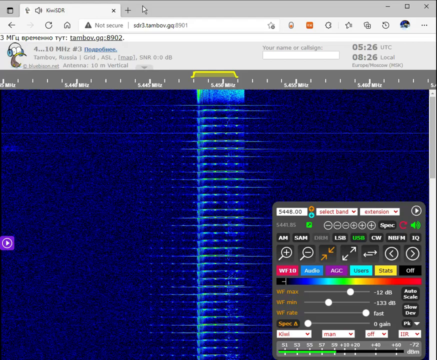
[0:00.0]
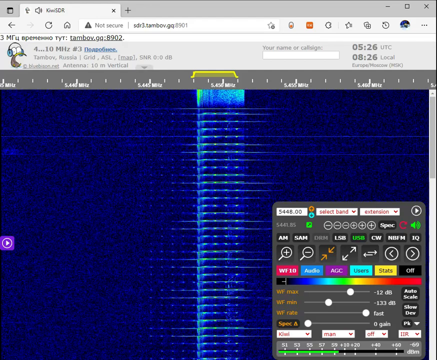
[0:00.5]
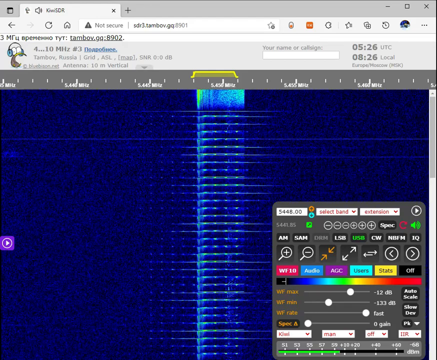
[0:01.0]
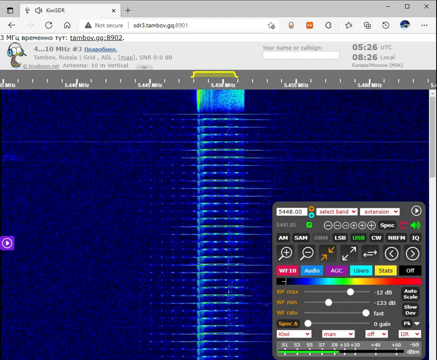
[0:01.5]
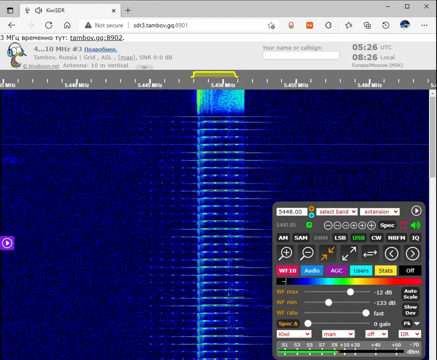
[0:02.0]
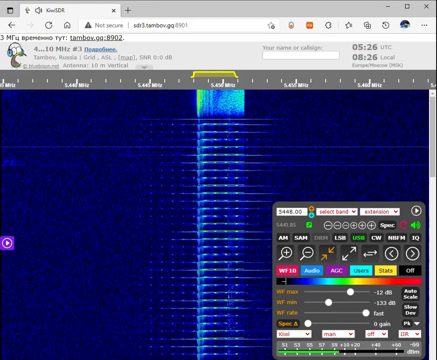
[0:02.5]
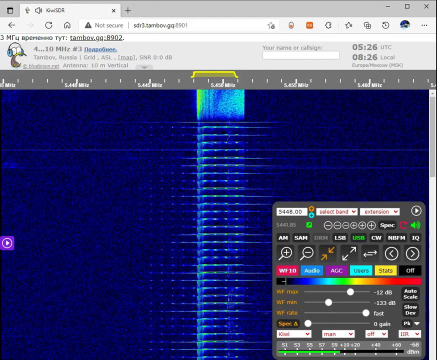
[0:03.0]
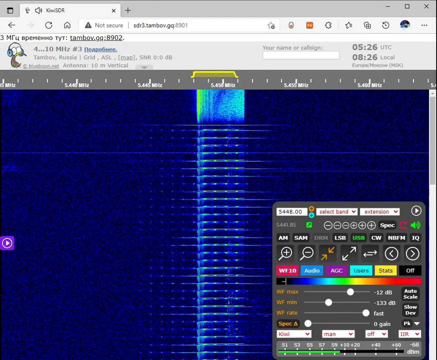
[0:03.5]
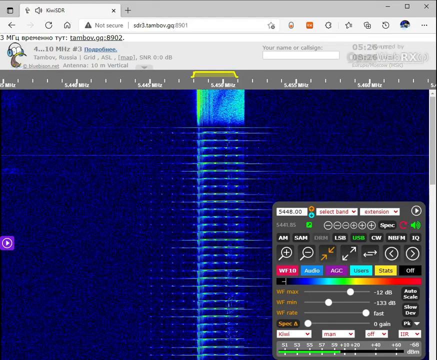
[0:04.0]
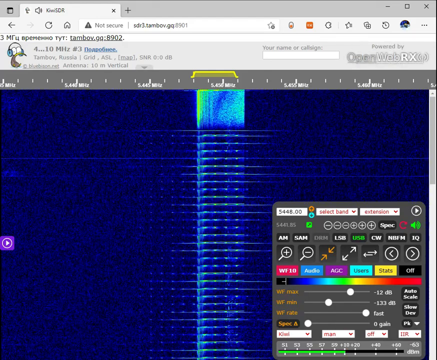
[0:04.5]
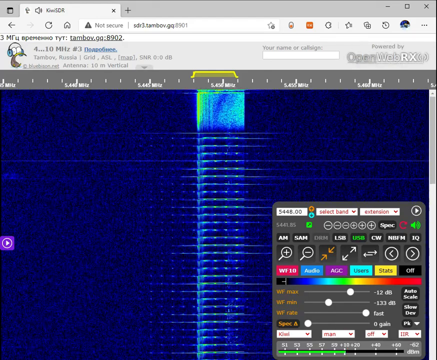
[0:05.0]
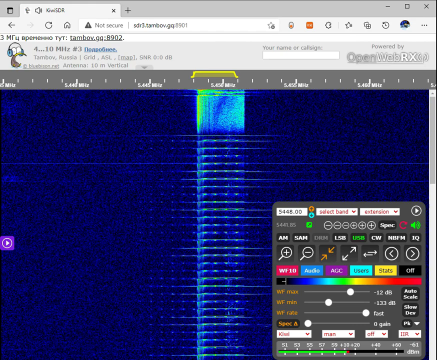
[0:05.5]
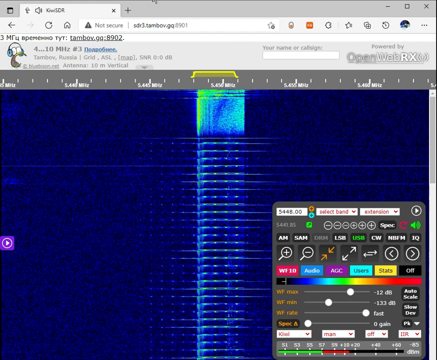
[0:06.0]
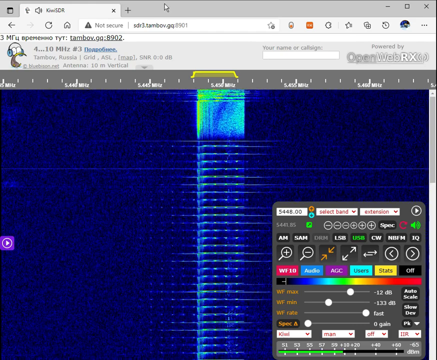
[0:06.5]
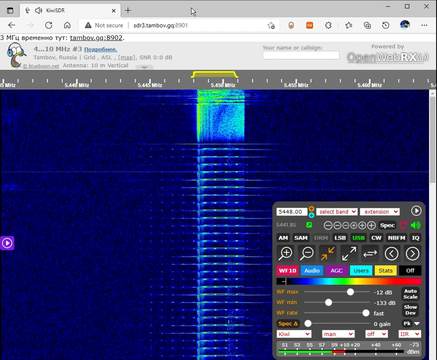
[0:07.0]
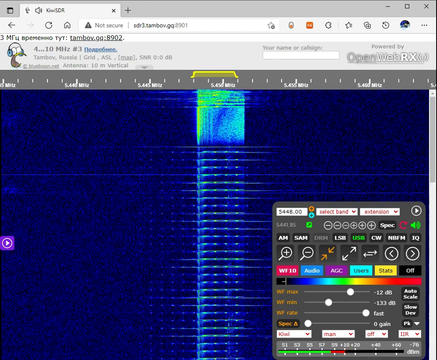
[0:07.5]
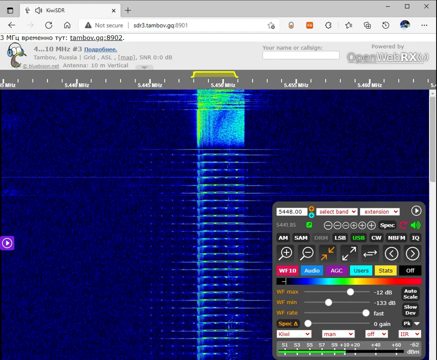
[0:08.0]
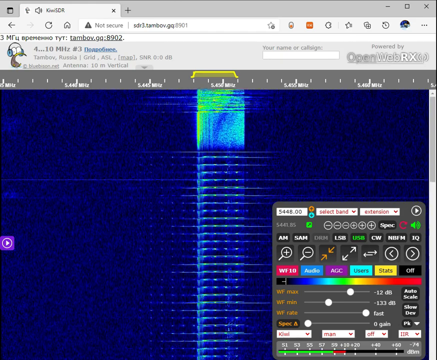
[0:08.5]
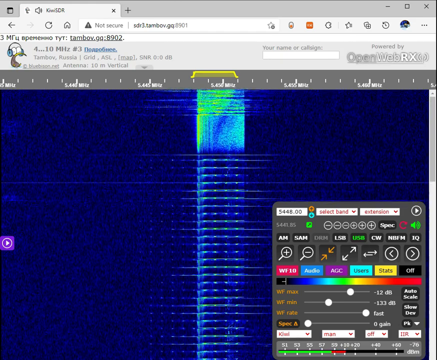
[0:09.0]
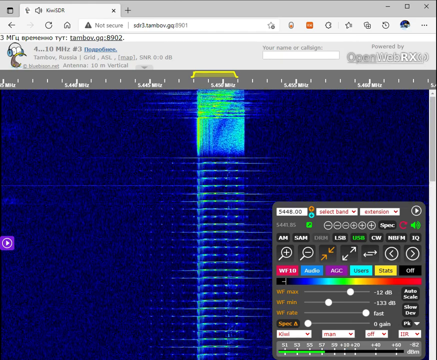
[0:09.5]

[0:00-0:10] A computer program indicates it is powered by OpenWebRX and relates to radio coming out of Russia. In the middle of a very pixelated, royal blue screen is a vertical line, and off of it run horizontal lines in a lighter green-blue color; they are fairly wide, roughly two or three inches. In the bottom right corner there appears to be a console for changing settings. The highlighted button reads "USB" and is green, and the sound button is also green, so these two seem to be active. Most of the text is written in Russian, though "Europe Moscow" appears underneath the time. The text "tambov.go:8902" is also shown, apparently a user's handle or call sign.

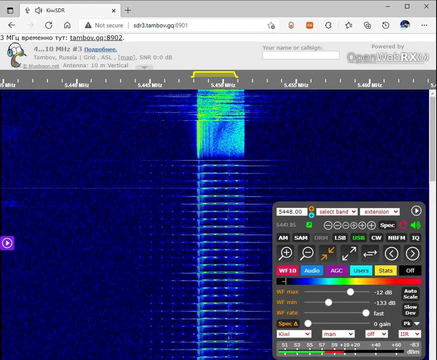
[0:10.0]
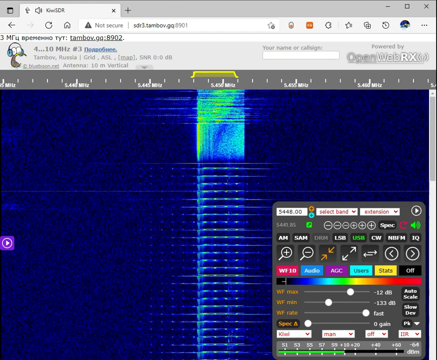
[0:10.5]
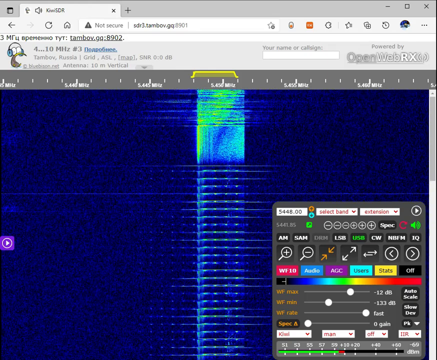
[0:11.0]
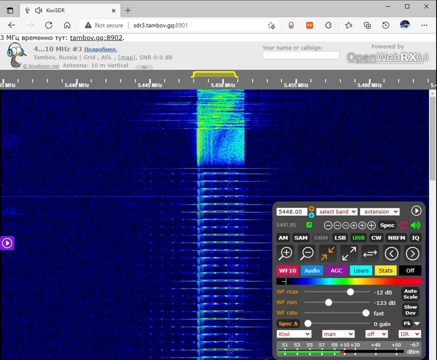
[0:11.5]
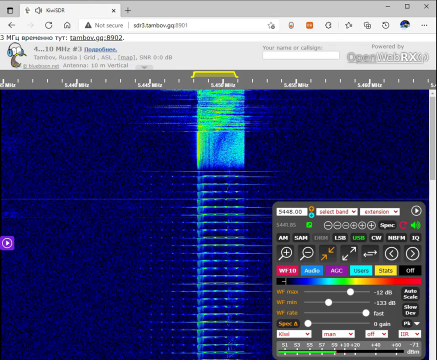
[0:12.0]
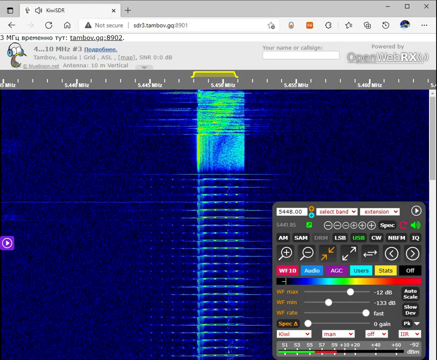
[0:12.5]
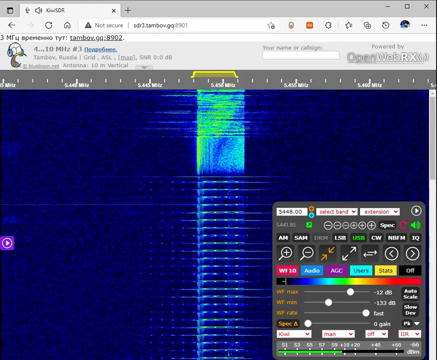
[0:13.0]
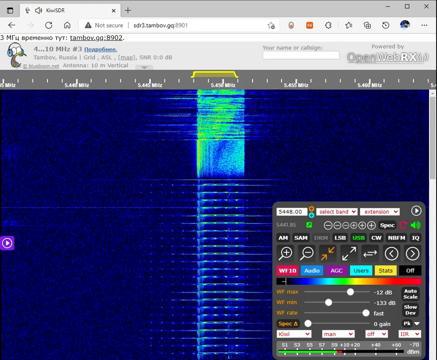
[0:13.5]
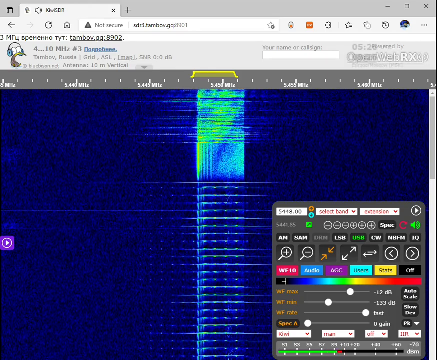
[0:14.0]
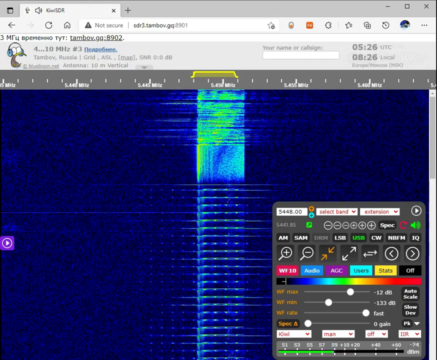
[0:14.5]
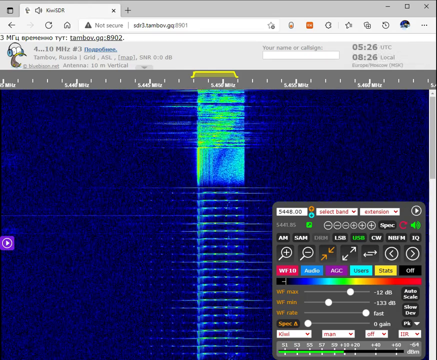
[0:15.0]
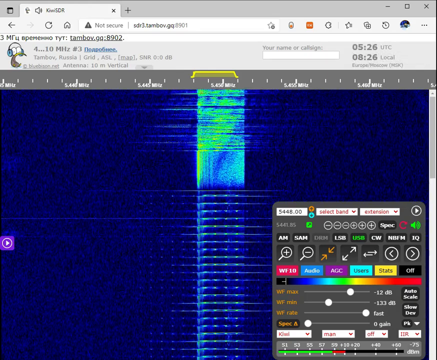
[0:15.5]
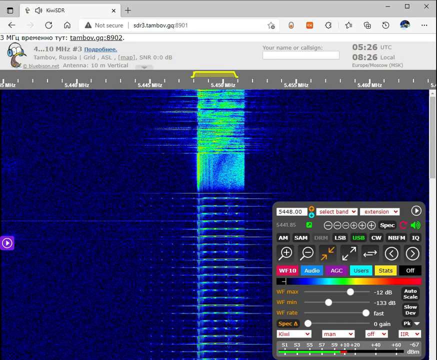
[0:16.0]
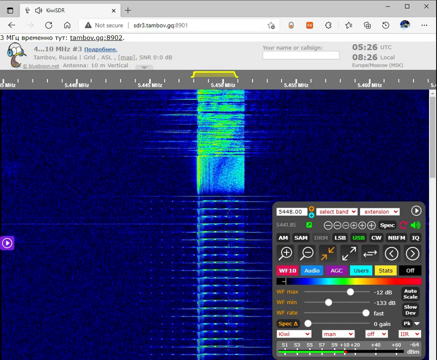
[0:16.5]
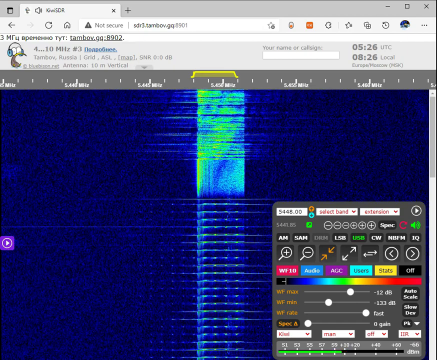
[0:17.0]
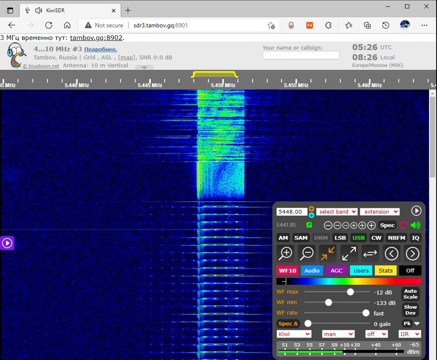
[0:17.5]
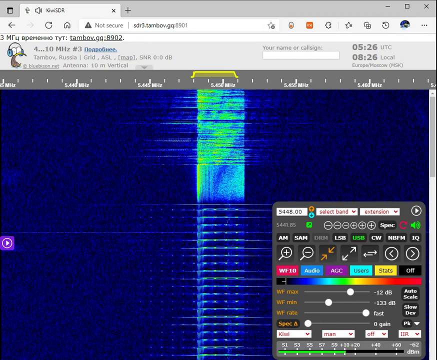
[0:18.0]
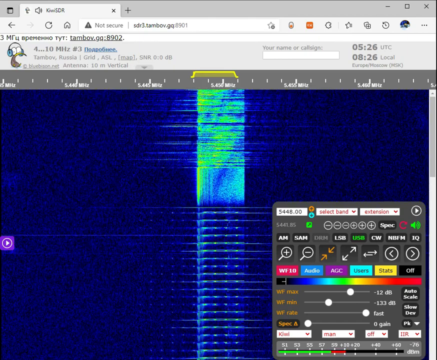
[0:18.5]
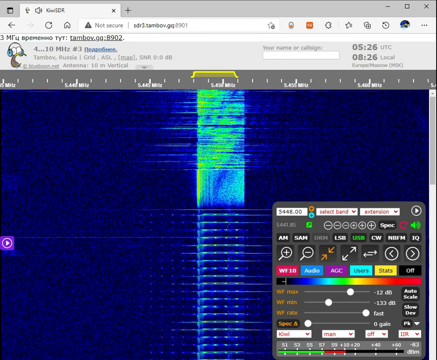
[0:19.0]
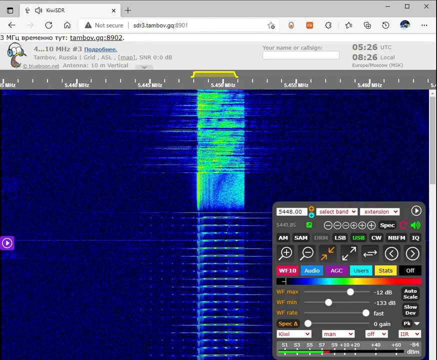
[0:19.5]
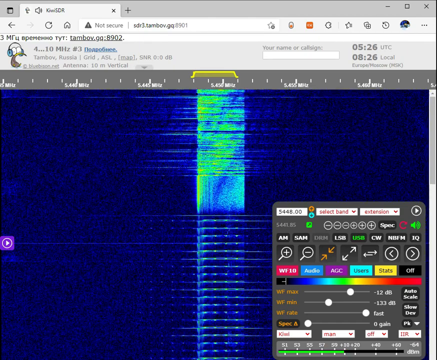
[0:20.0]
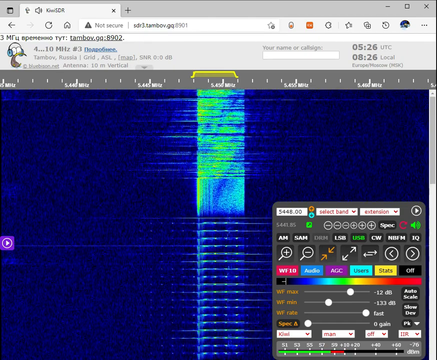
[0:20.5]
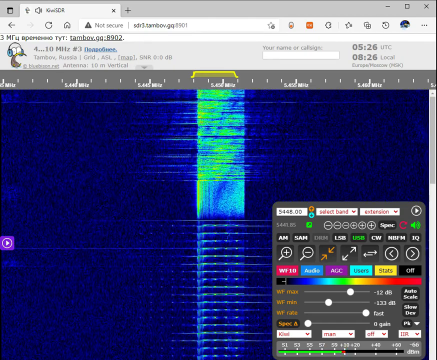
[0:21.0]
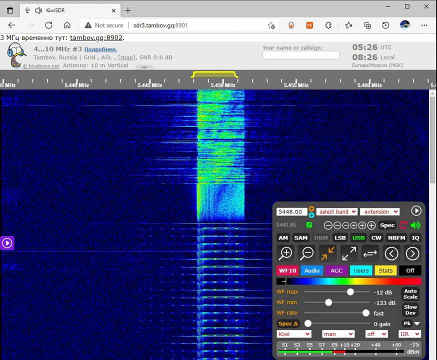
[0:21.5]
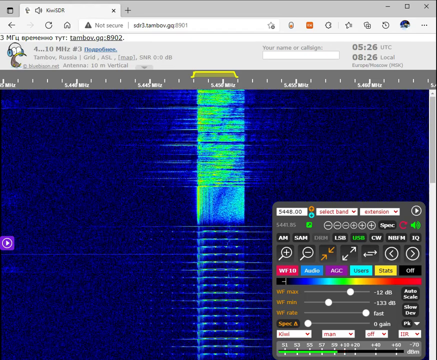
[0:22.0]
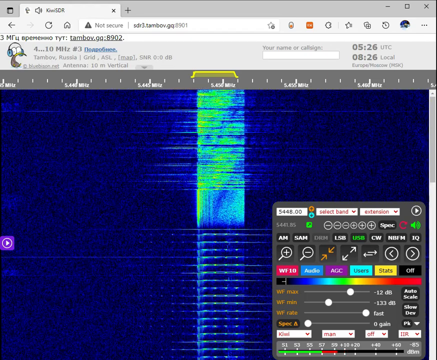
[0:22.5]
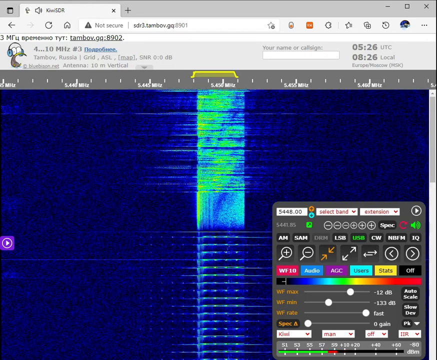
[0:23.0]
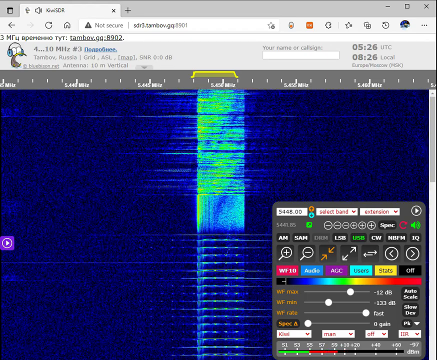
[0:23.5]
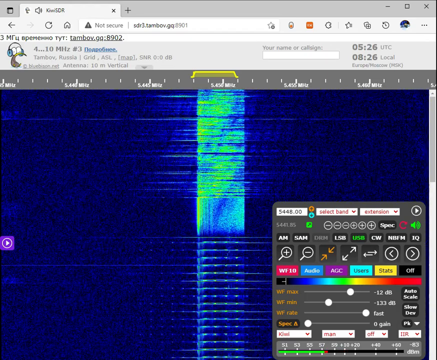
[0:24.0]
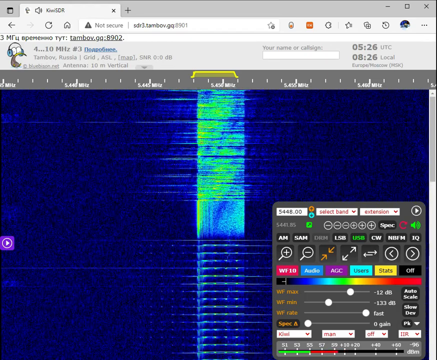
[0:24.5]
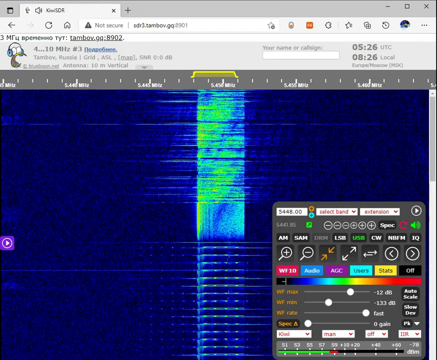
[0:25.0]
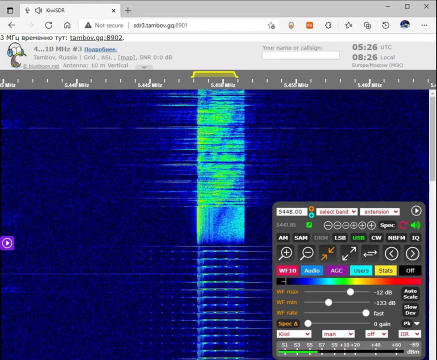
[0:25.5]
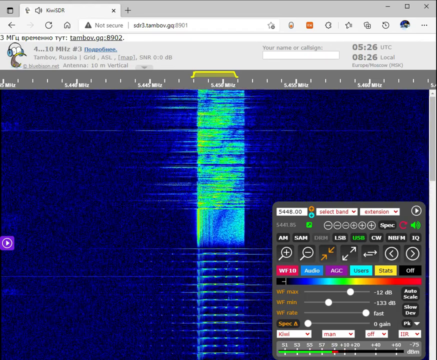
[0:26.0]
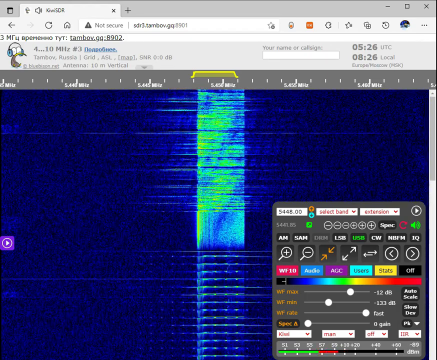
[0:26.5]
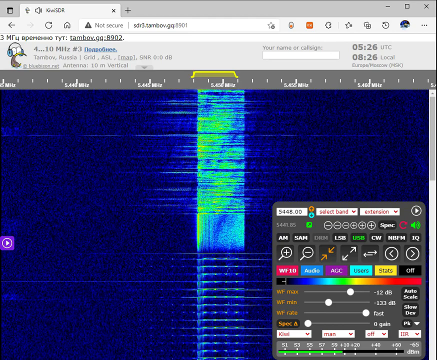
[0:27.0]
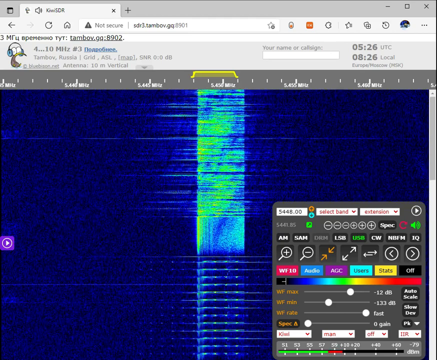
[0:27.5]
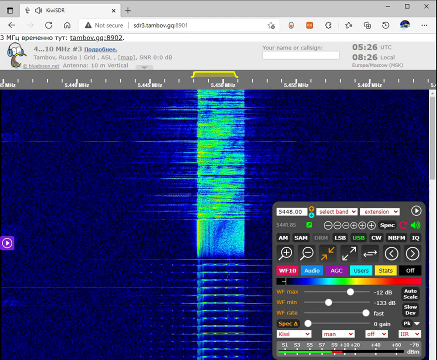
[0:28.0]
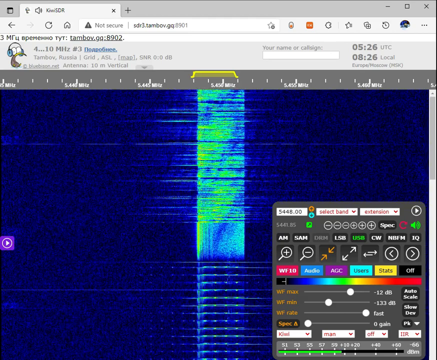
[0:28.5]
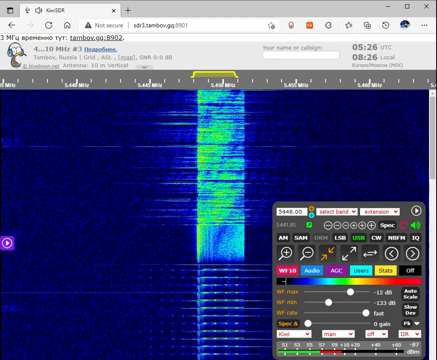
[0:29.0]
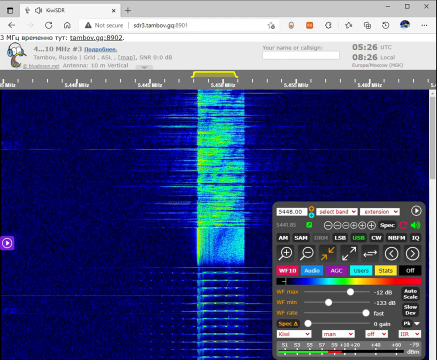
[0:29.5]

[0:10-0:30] The graphic in the center of the screen moves downward, and as it does, more and more data appears. The horizontal lines along the vertical line grow much thicker and darker, going from barely visible light green lines to very thick dark light green and yellow lines, while the lighter lines fade away toward the bottom. The background is a pixelated royal blue, some of it dark royal blue and some a lighter royal blue. The rest of the interface is gray with darker gray writing. The console at the bottom, which seems to hold the settings, is a darker gray with white or lighter gray writing and has some colored buttons.